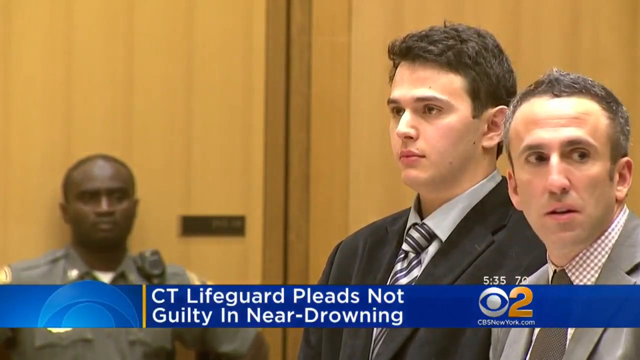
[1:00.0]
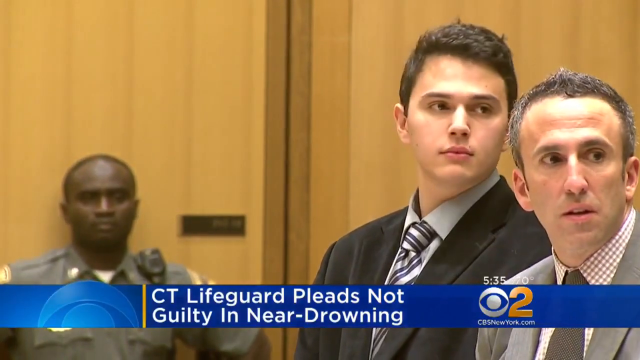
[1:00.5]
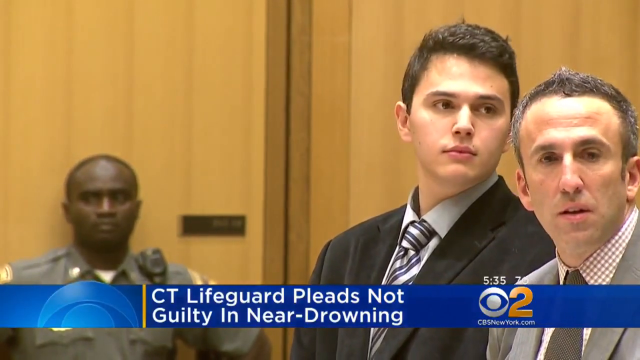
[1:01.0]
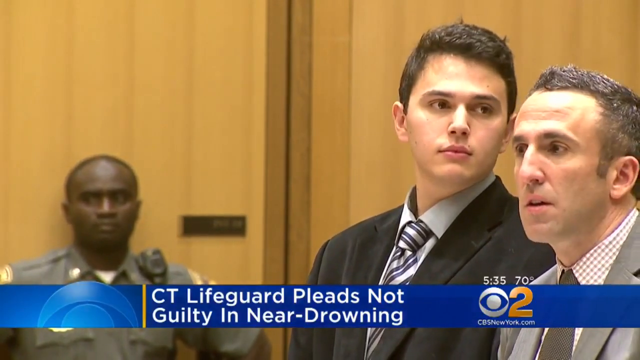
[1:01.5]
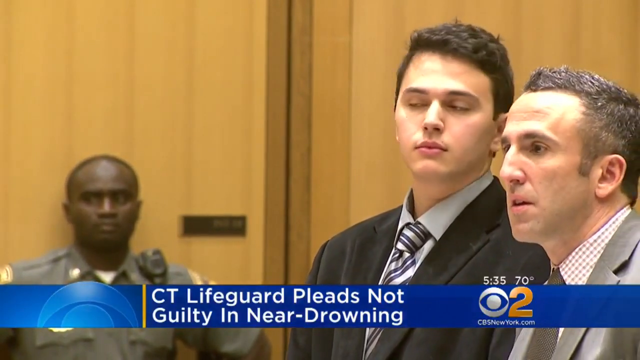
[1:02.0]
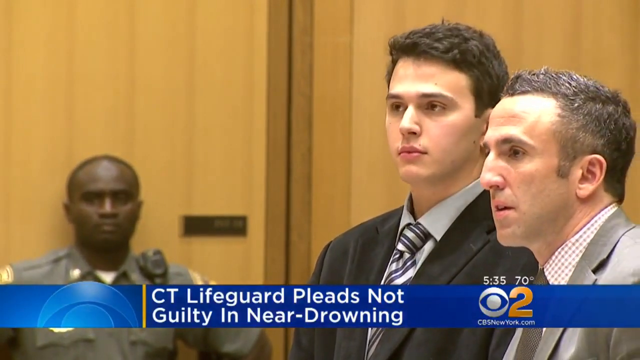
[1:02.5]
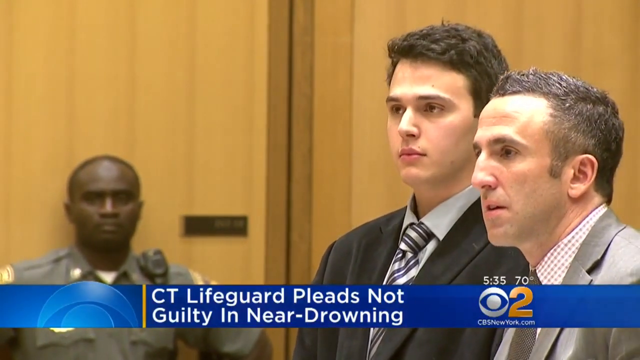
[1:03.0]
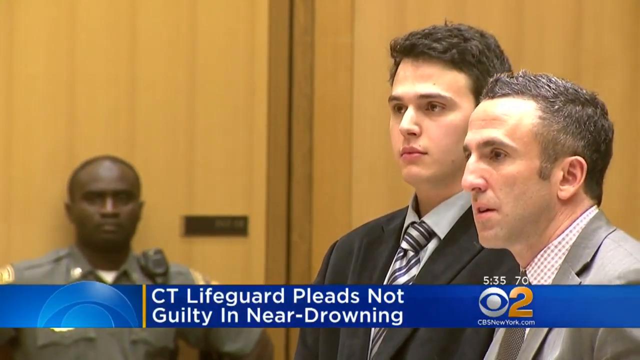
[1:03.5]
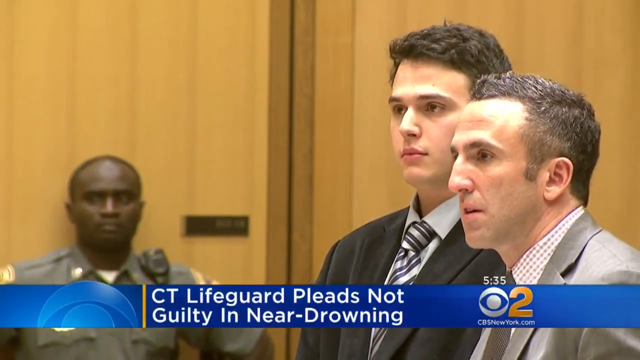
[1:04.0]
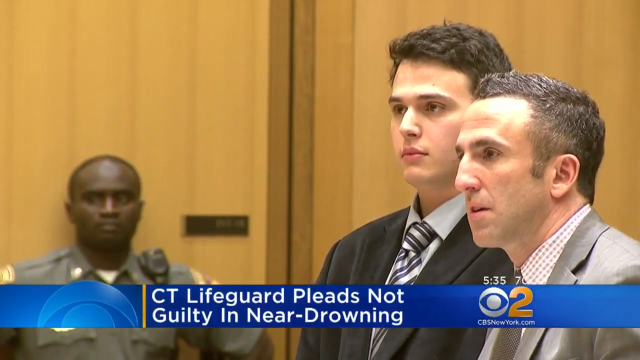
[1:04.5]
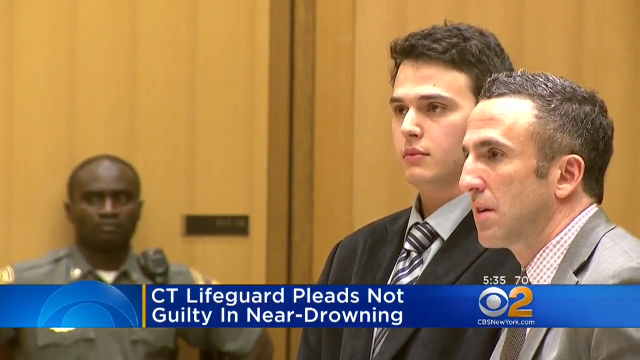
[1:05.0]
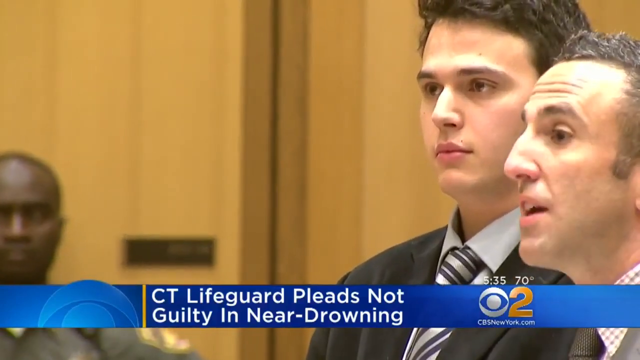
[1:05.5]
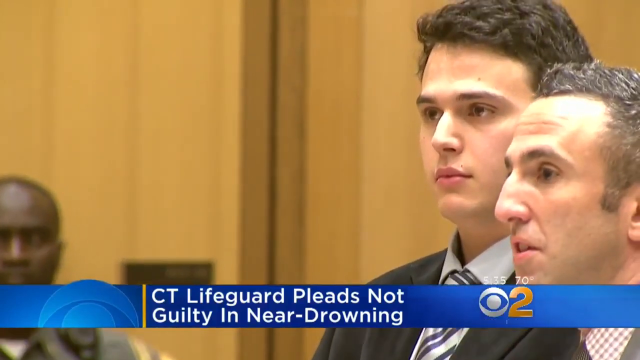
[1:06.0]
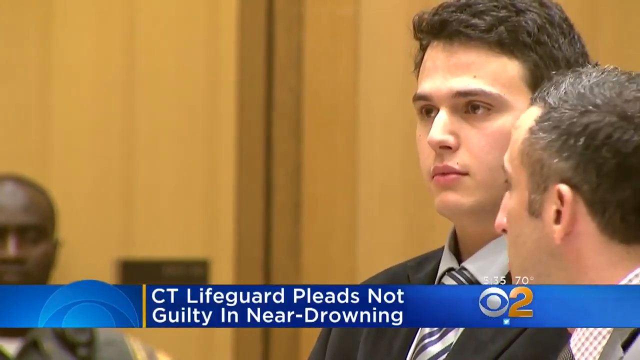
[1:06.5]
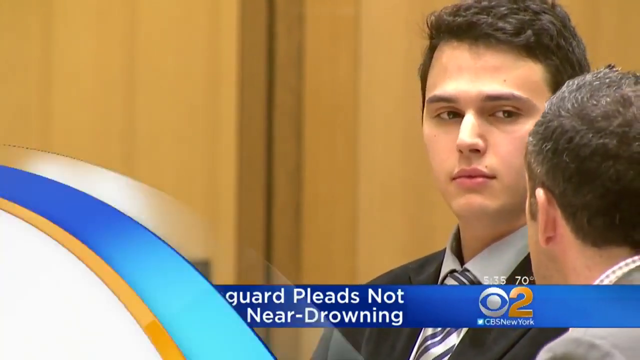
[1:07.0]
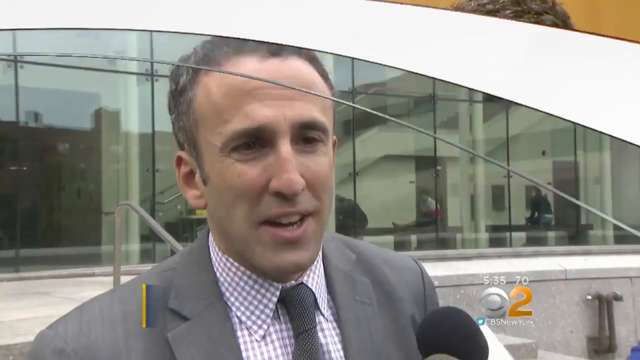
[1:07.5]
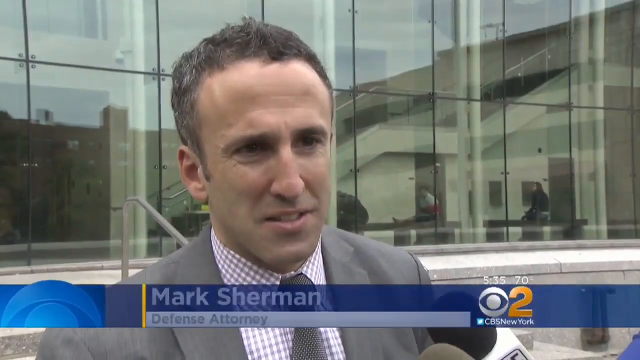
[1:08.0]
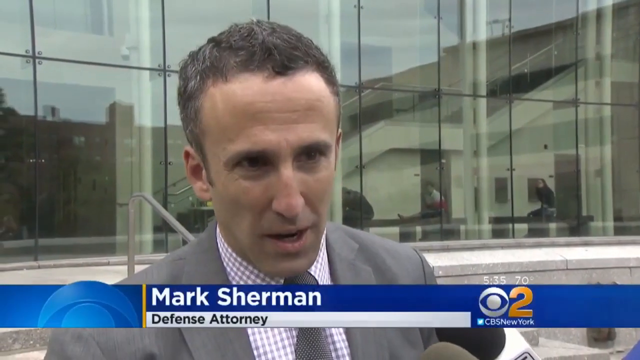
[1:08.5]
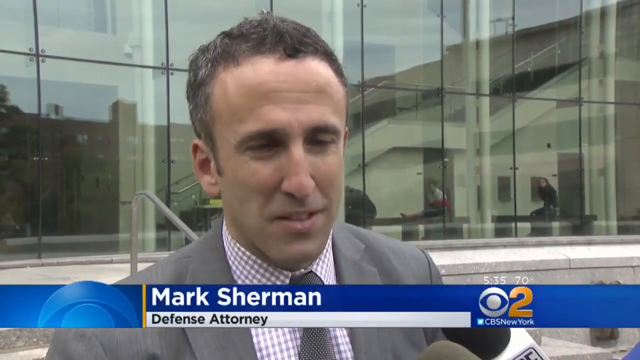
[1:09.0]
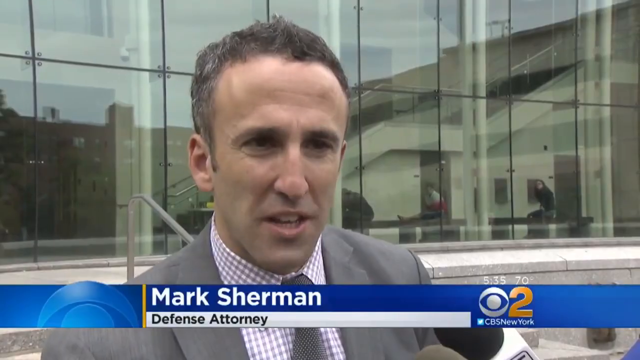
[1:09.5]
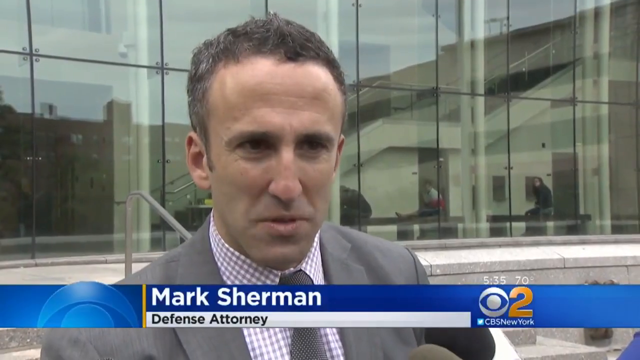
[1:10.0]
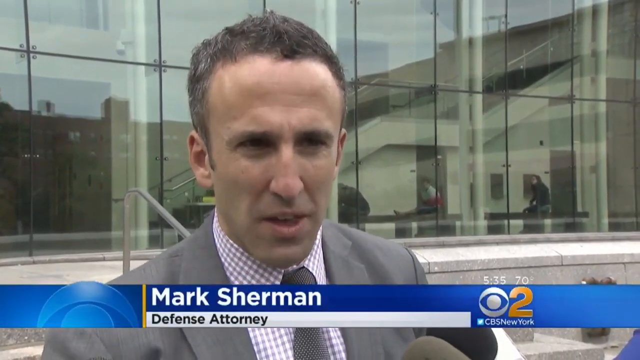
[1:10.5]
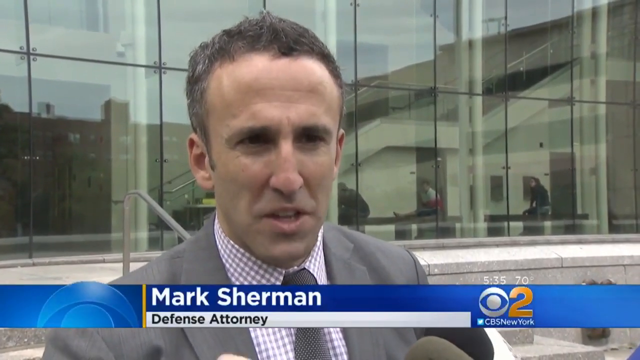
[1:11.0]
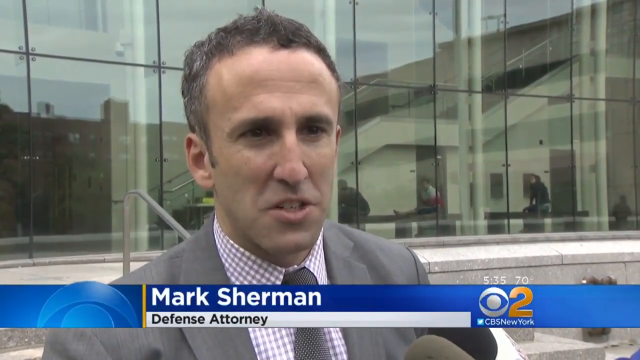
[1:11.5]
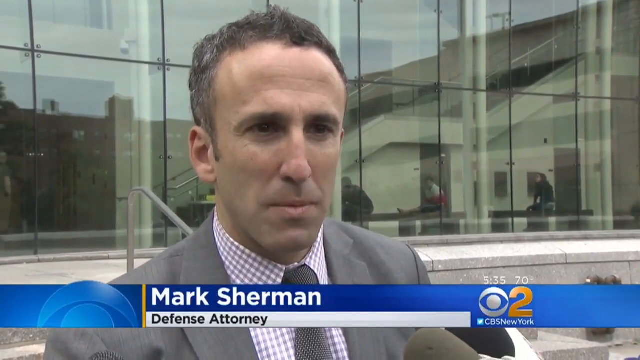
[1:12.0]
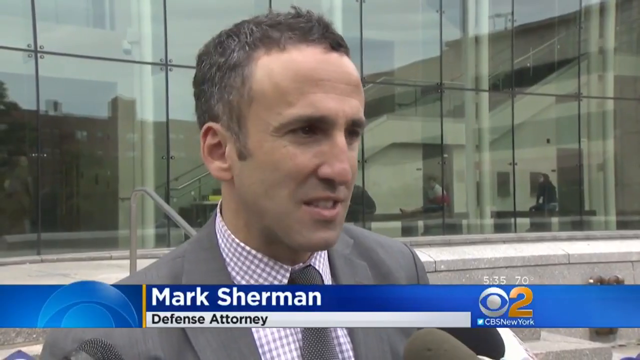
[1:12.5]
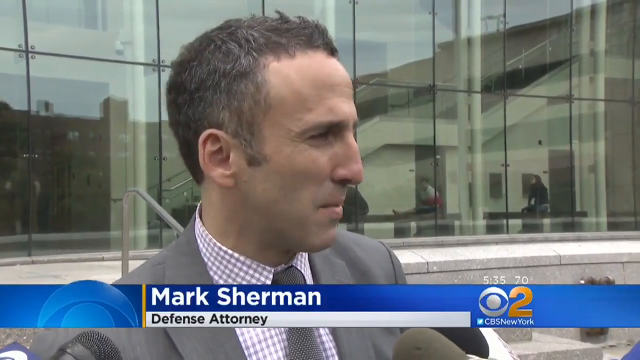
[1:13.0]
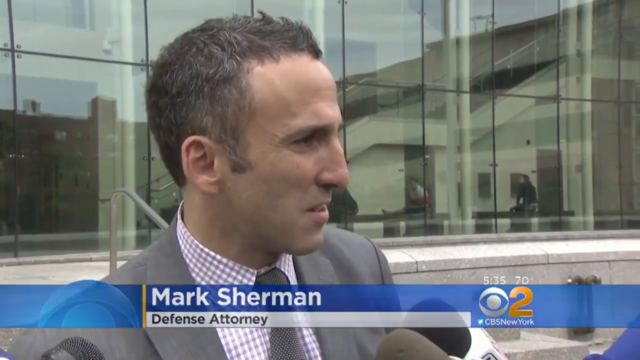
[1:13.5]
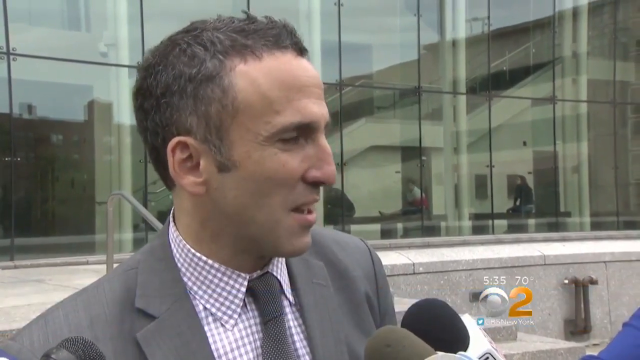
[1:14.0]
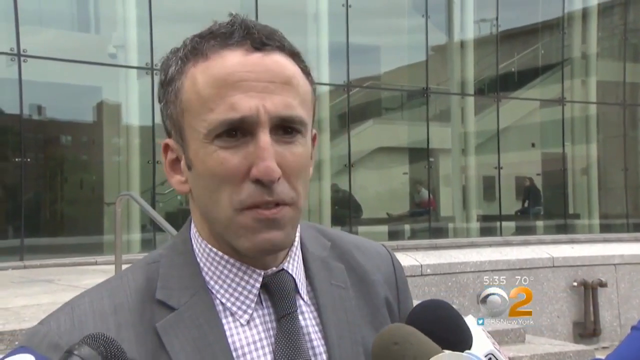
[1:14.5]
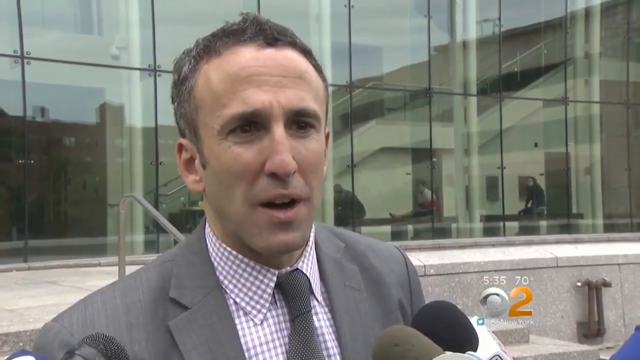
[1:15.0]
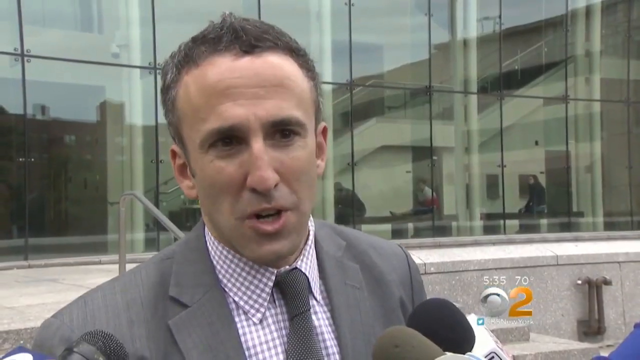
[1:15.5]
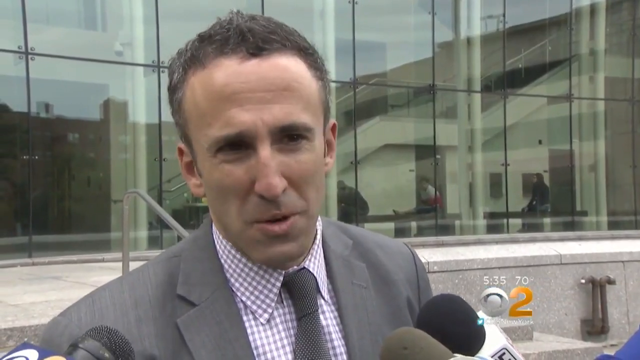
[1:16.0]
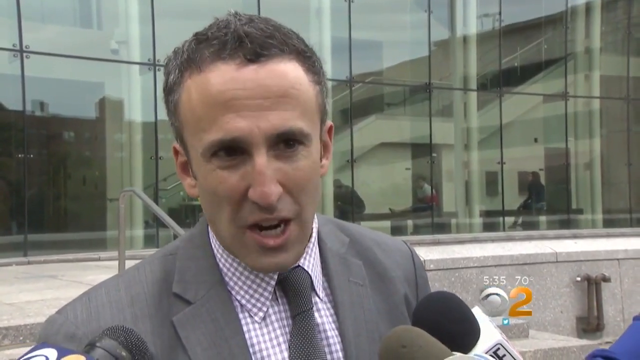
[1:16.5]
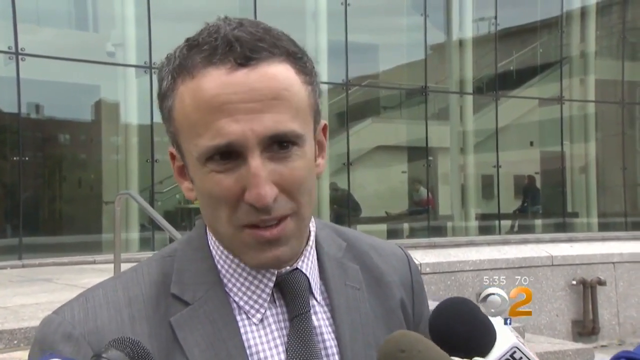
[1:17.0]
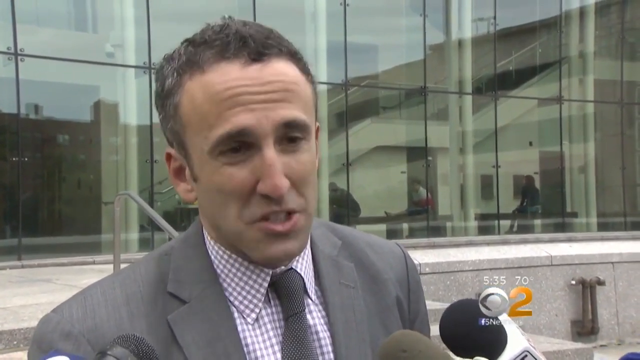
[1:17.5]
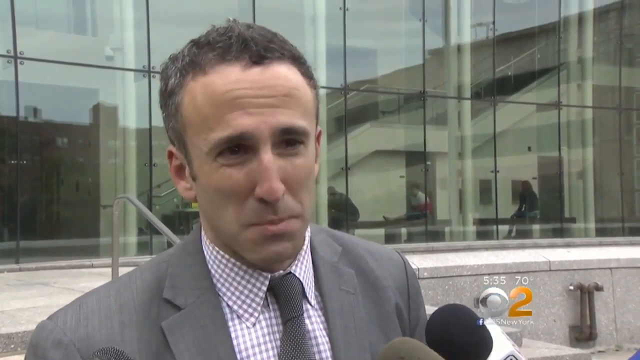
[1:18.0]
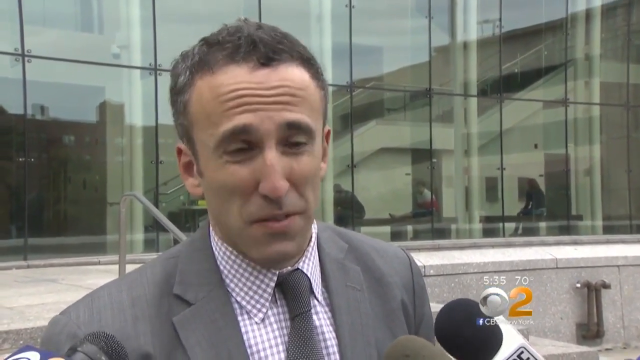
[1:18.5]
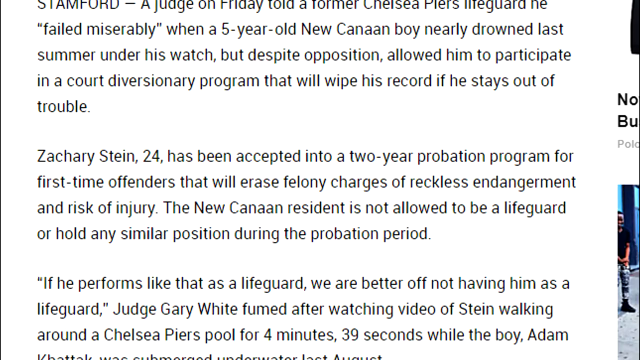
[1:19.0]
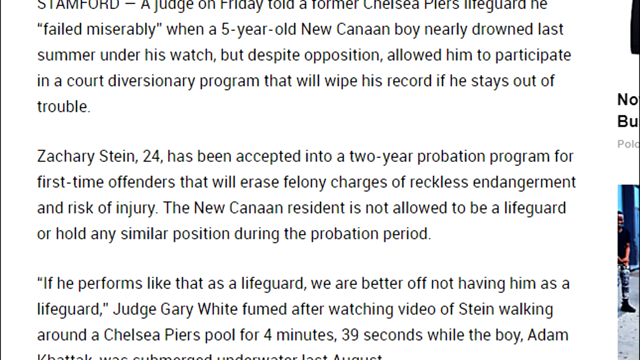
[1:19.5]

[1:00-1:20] Clips of the lifeguard in court and court documents are shown, with text saying the lifeguard in Connecticut pleads not guilty in a child near-drowning case. He wears a black suit with a gray shirt and a gray striped tie, and his lawyer wears a gray suit with a plaid shirt and tie. The video cuts to B-roll of the kids playing in the pool, then returns to the woman presenting, who wears a pink top and a floral black and red skirt, with the image of the kids at the pool on the big screen.